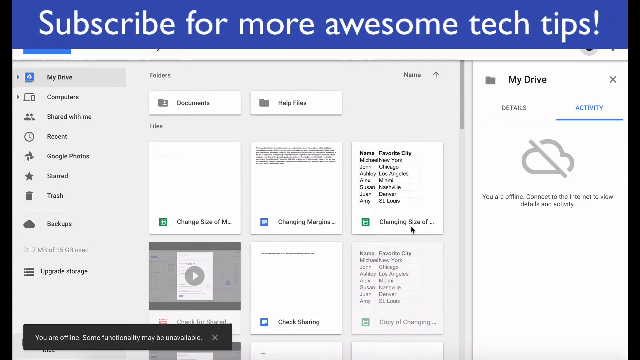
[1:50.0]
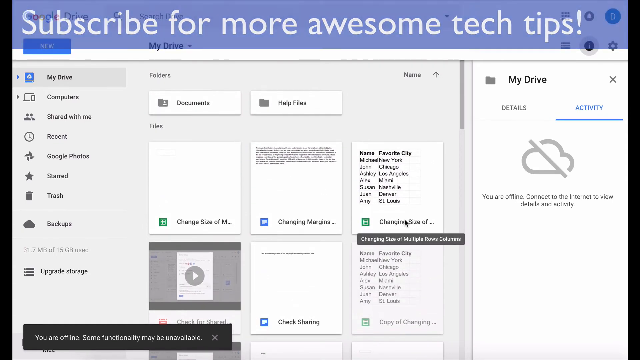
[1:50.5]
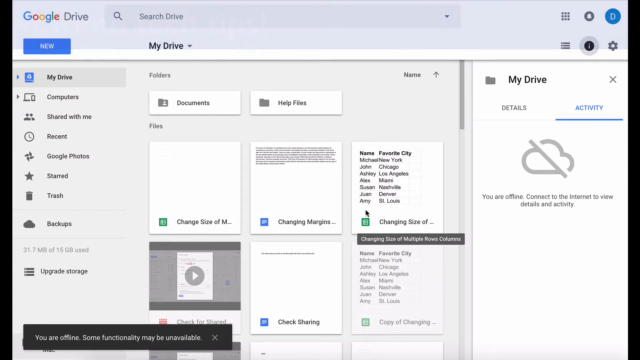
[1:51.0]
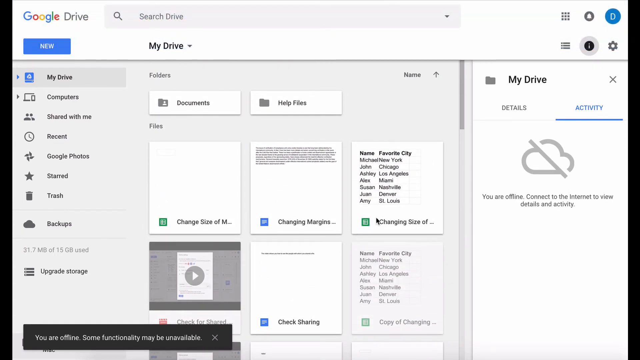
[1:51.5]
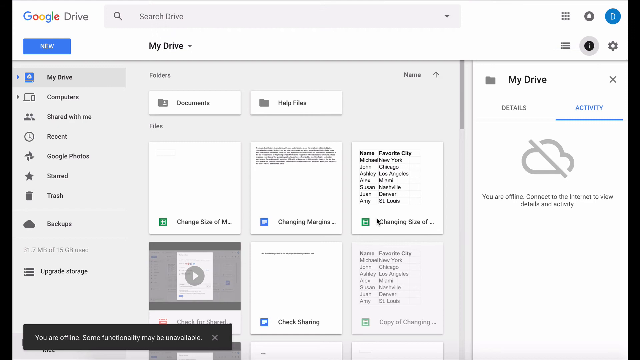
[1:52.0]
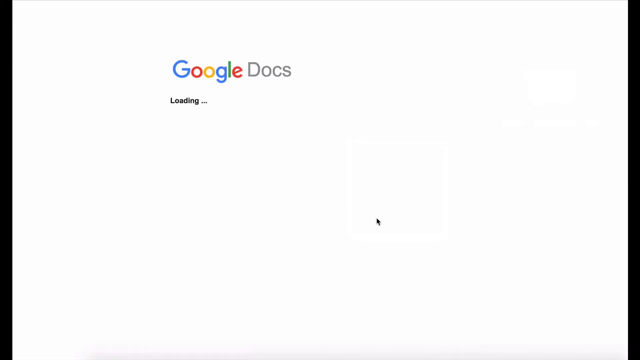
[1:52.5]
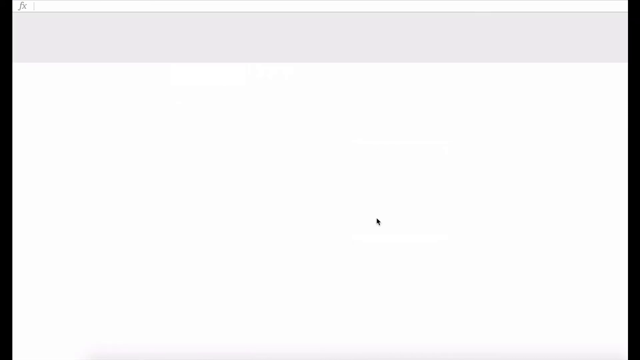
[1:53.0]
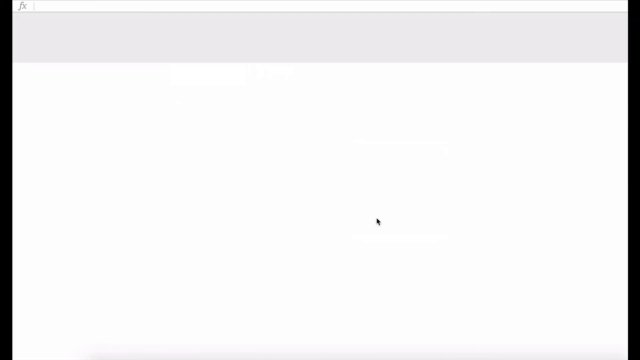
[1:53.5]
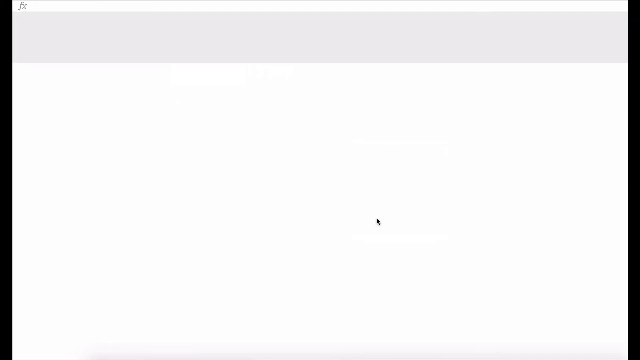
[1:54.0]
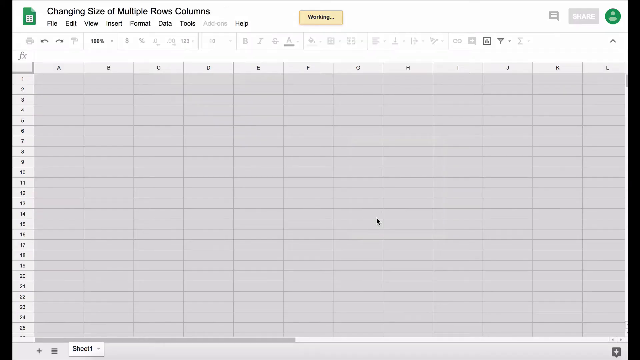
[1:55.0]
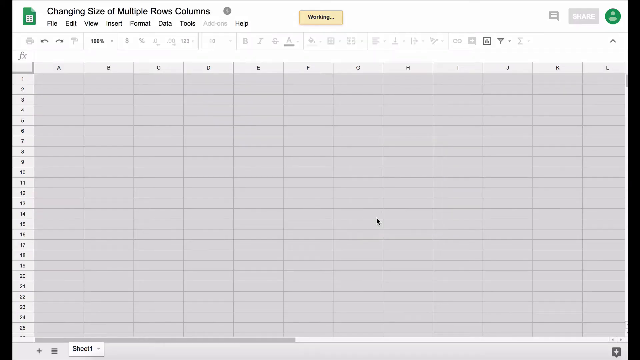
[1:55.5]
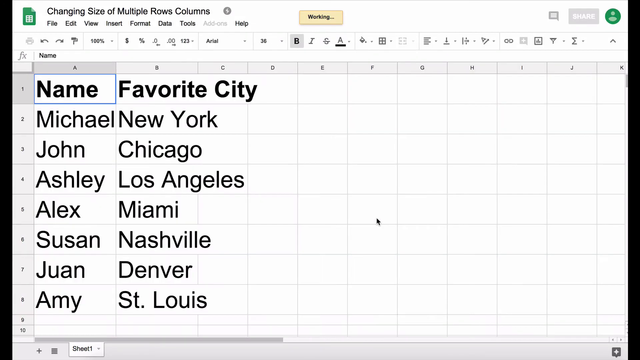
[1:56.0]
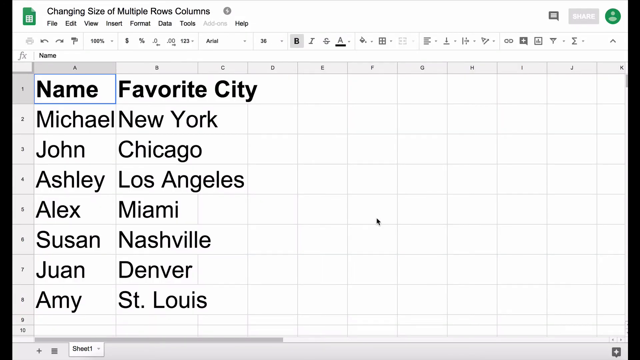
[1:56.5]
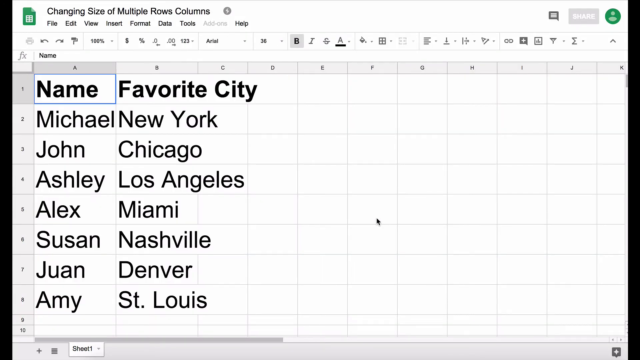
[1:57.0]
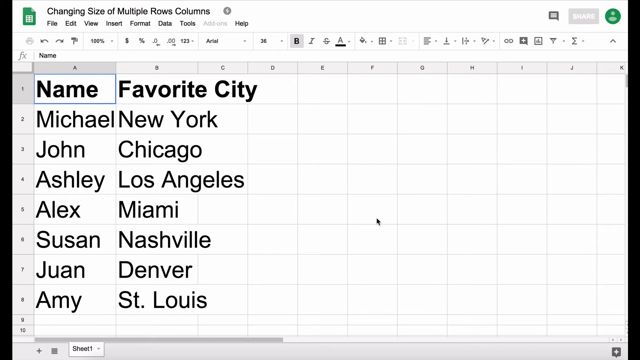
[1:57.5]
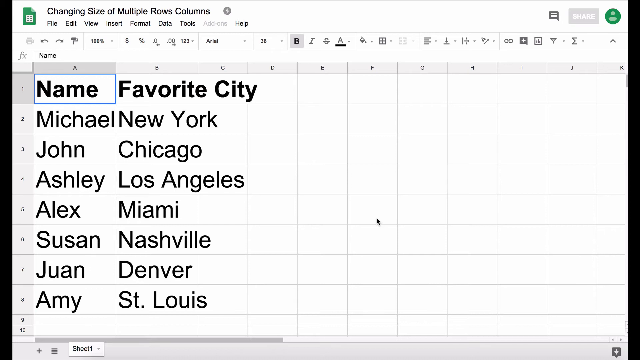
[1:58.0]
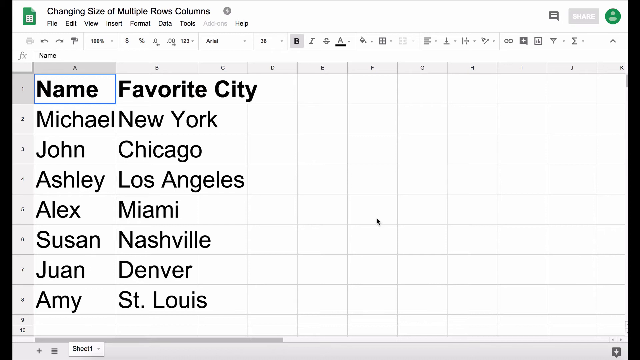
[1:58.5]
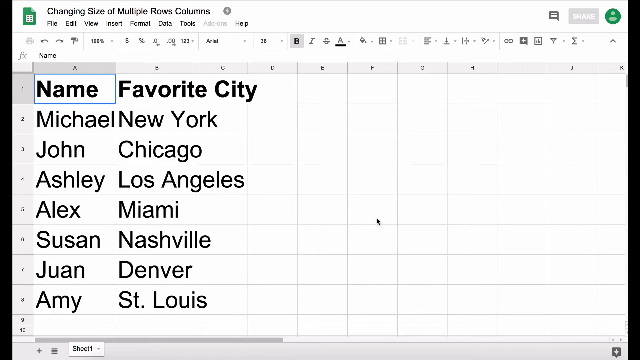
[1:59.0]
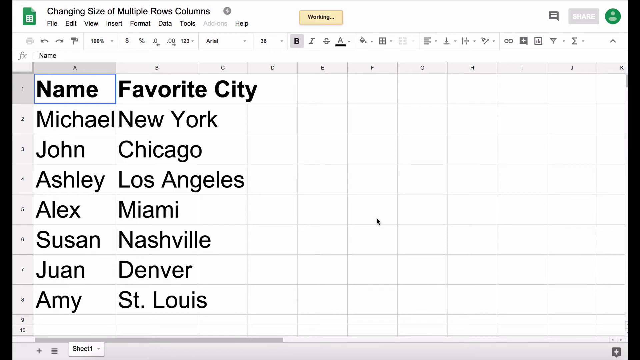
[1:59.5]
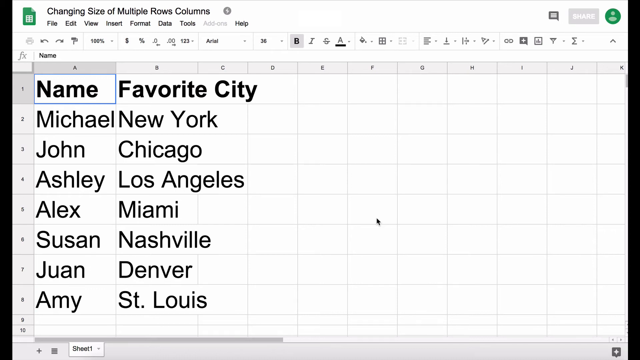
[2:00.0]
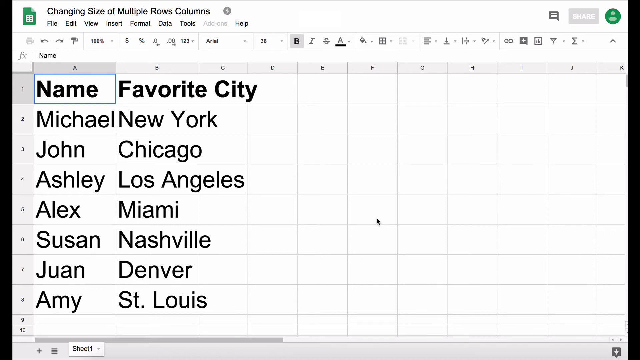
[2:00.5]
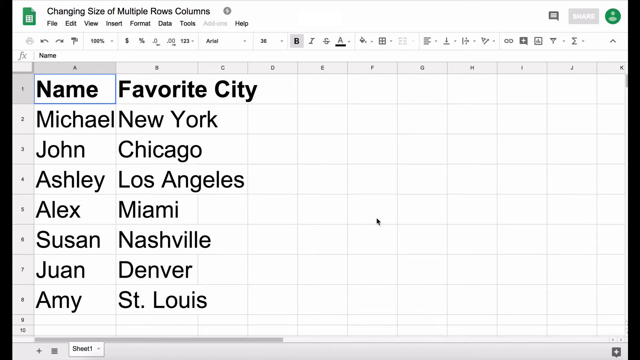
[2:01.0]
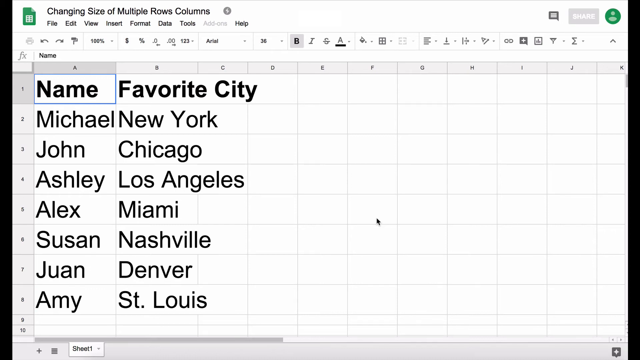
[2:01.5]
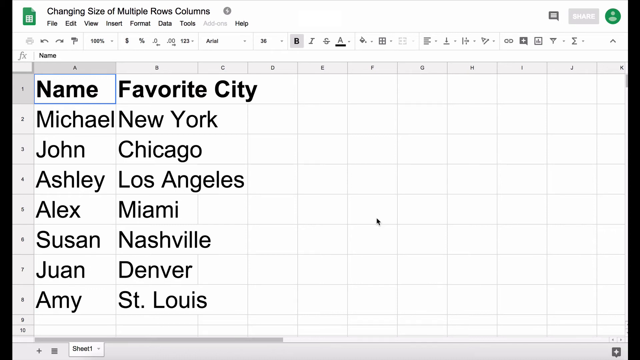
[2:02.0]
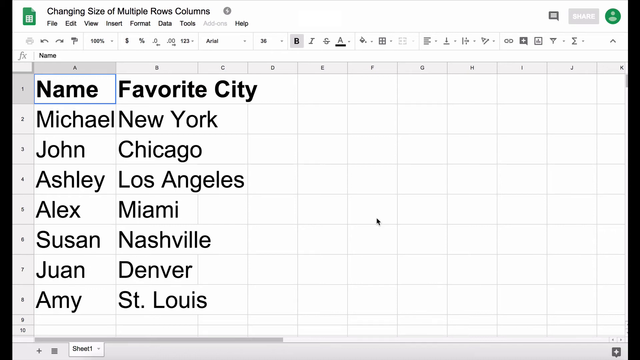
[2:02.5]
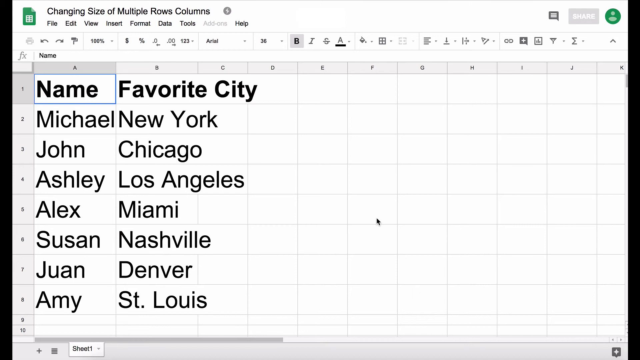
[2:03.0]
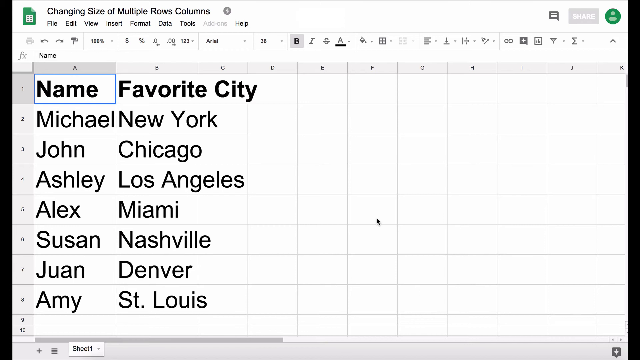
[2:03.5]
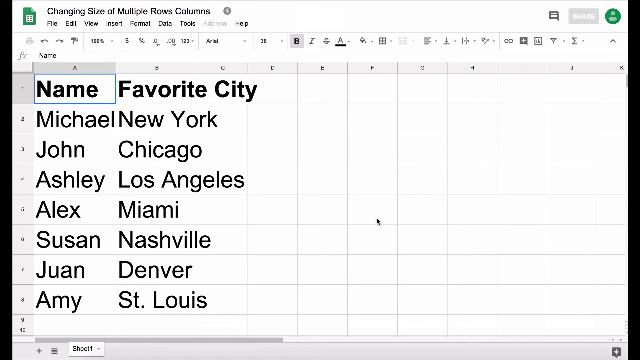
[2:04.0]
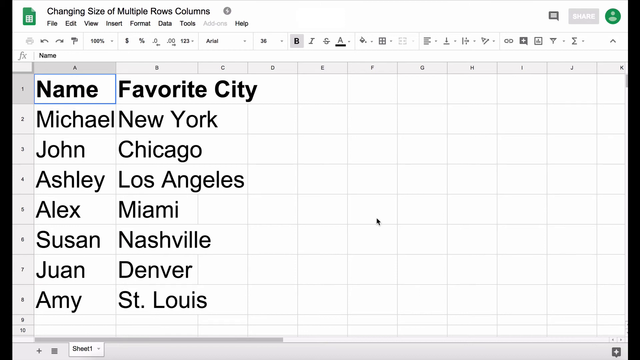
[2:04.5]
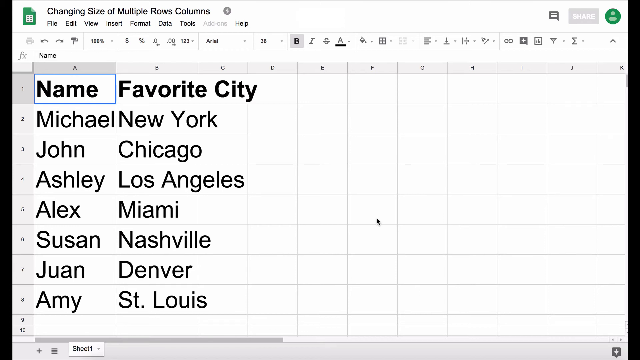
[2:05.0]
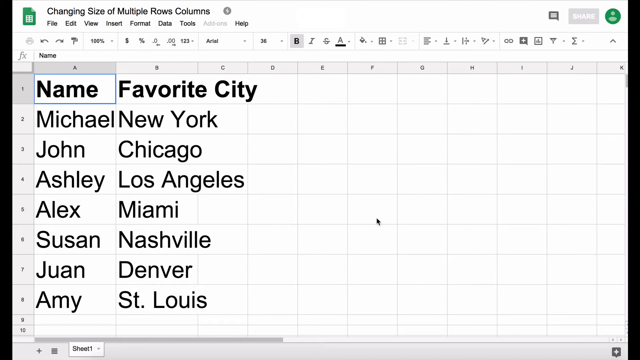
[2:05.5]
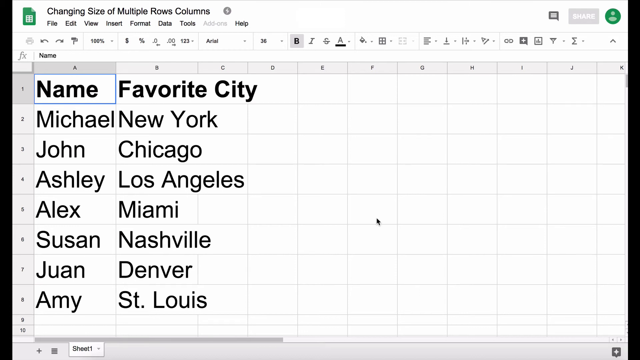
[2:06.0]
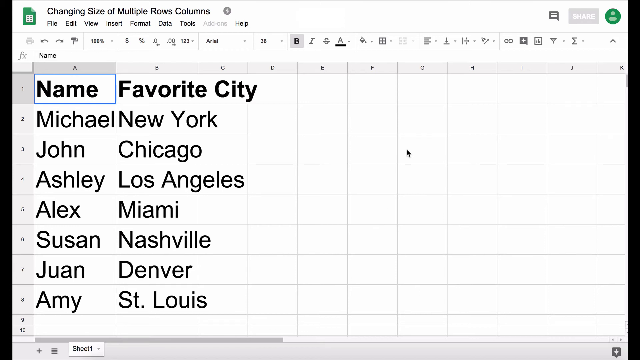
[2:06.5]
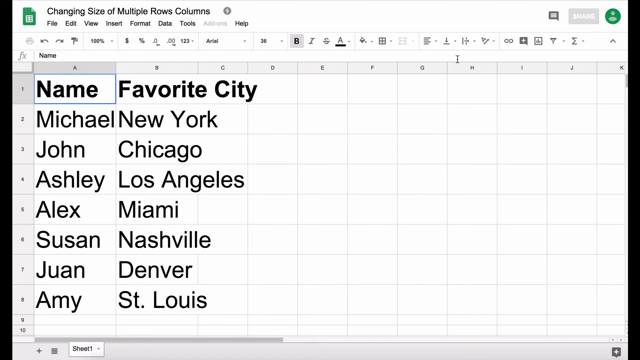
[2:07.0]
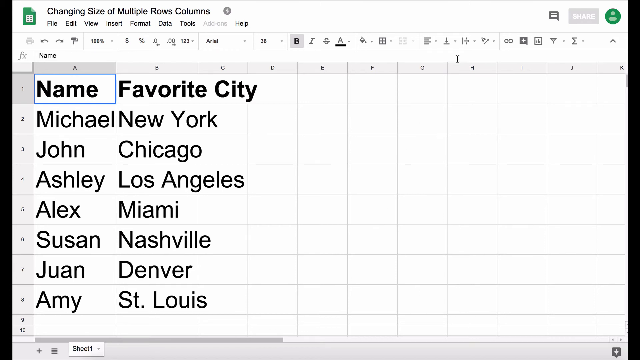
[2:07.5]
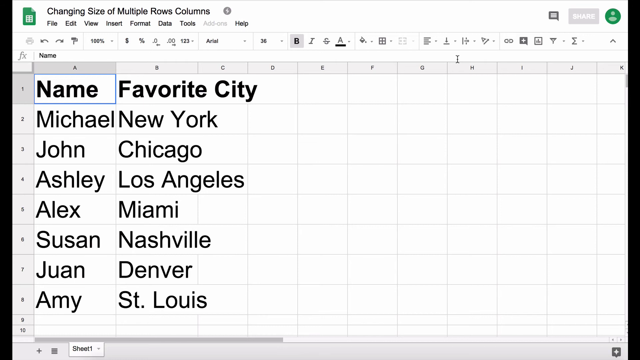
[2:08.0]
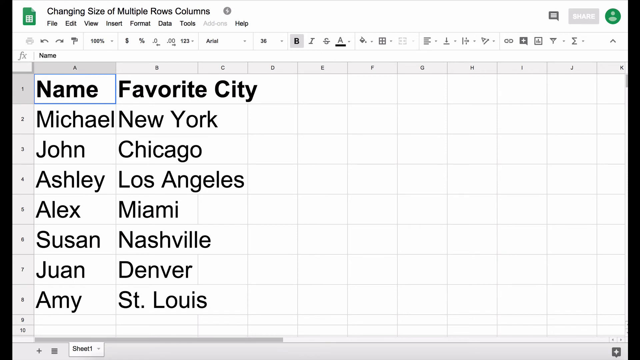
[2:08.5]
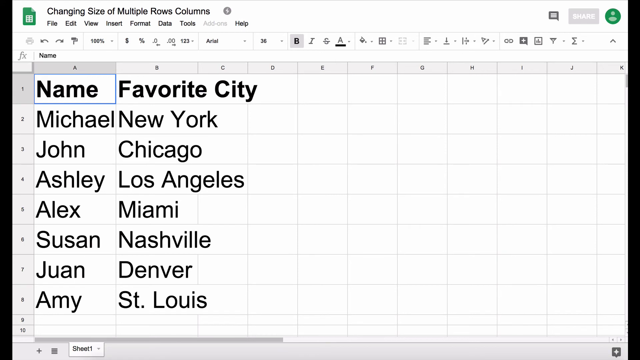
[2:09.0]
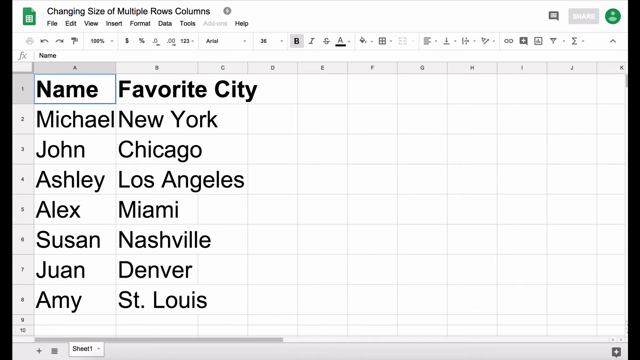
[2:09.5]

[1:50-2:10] Somebody appears to be on the Google Drive website, maybe making a video about how to use it. At the top, "subscribe for more awesome tech tips" appears in white text on a blue banner background. The page shows "Google Drive" at the top left and the search drive bar at the top center. At the top right are a variety of icons, one of which is a blue circle with a white D in it. Below Google Drive is "New", then "My Drive", "Computers", "Shared with me", "Recent", "Google Photos", "Starred", "Trash", "Backups" and "Upgrade storage". To the right are windows labeled "Documents", "Help files", an item beginning "Change size of M", and "Changing margins", and next to those "Name" and "Favorite city" with Michael, New York; John, Chicago; Ashley, Los Angeles; Alex, Miami; Susan, Nashville; Juan, Denver; Amy, St. Louis. On the right side of the page in the middle are "My Drive", "Details" and "Activity", with a message indicating the user is offline: "connect to the internet to view details and activity".